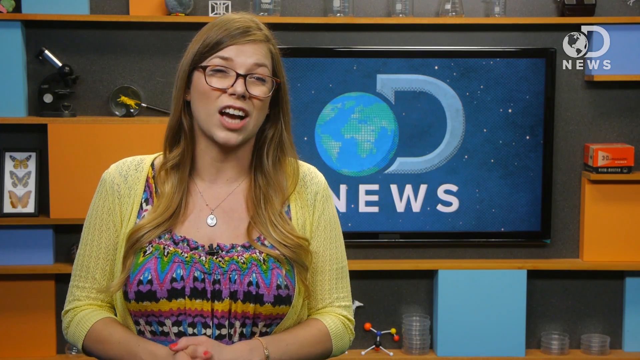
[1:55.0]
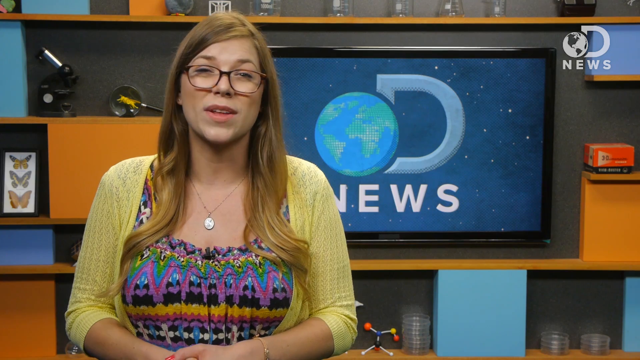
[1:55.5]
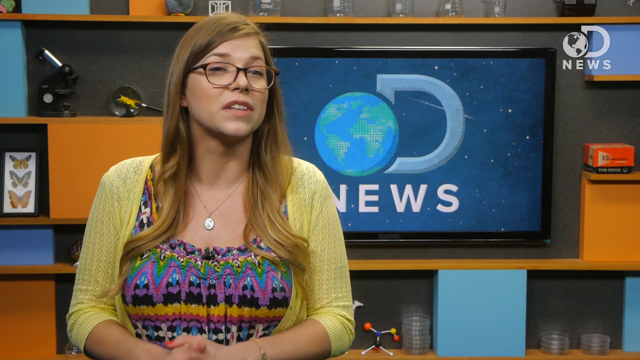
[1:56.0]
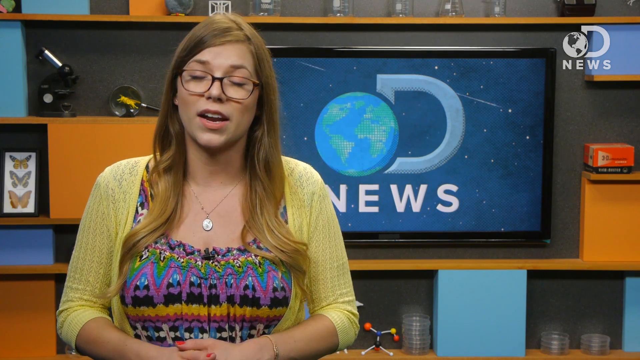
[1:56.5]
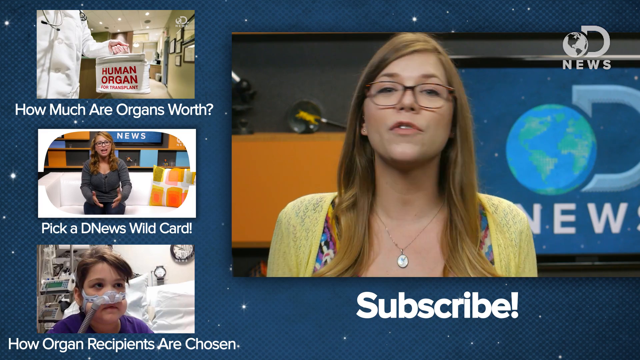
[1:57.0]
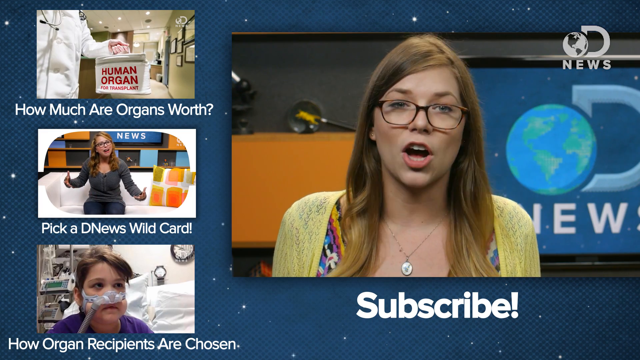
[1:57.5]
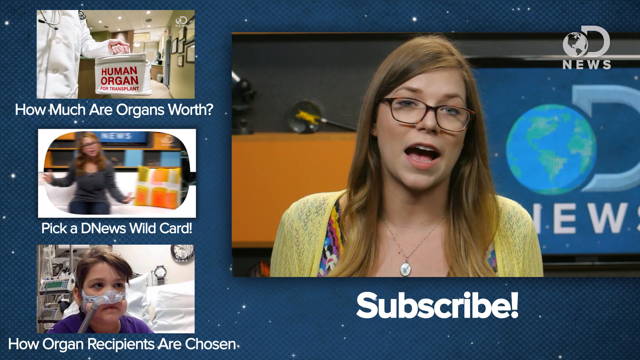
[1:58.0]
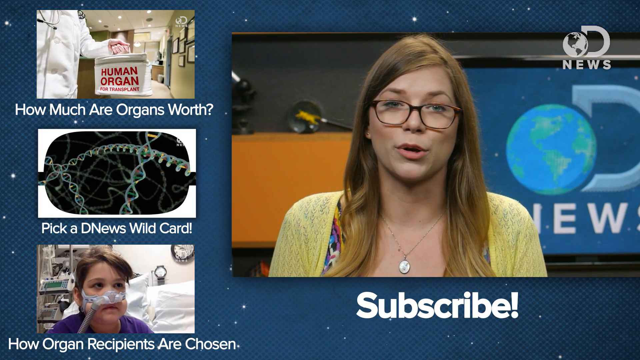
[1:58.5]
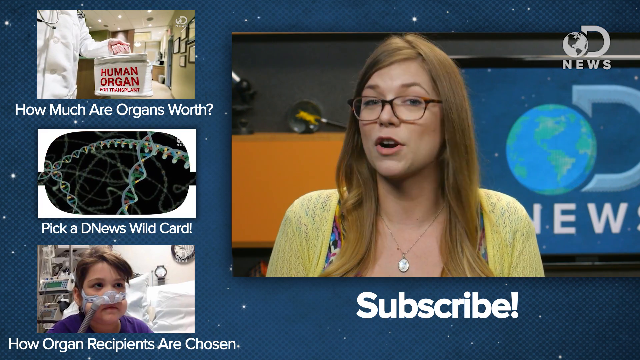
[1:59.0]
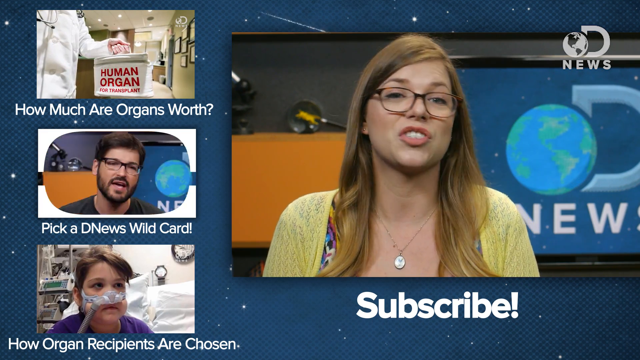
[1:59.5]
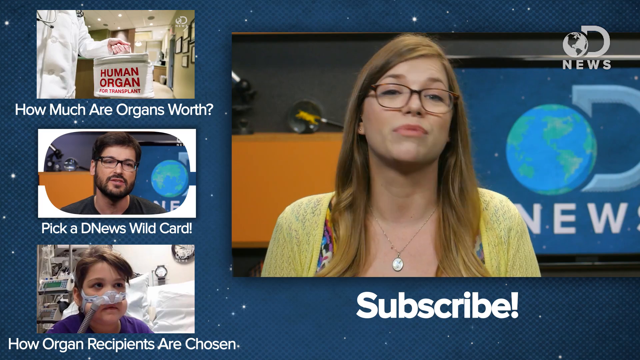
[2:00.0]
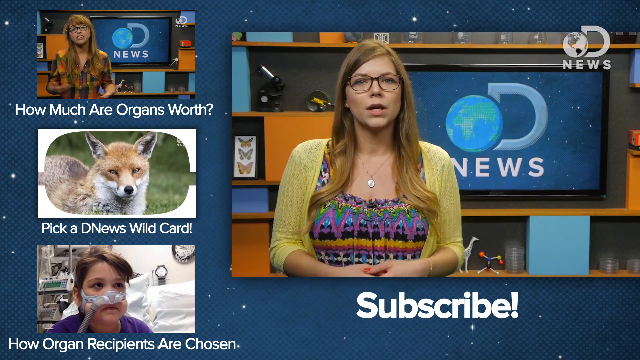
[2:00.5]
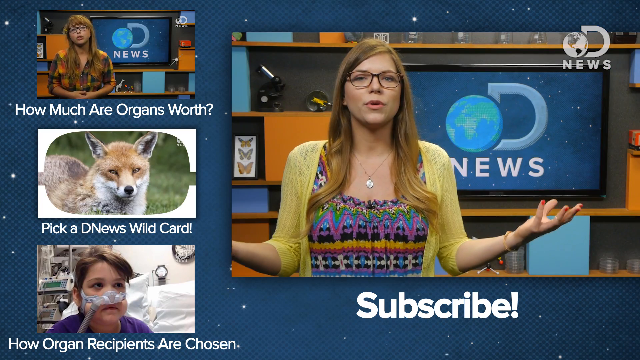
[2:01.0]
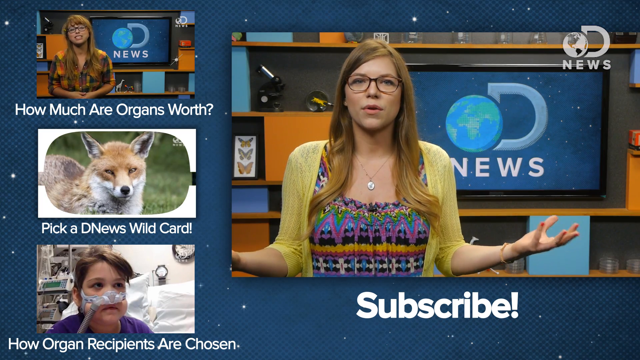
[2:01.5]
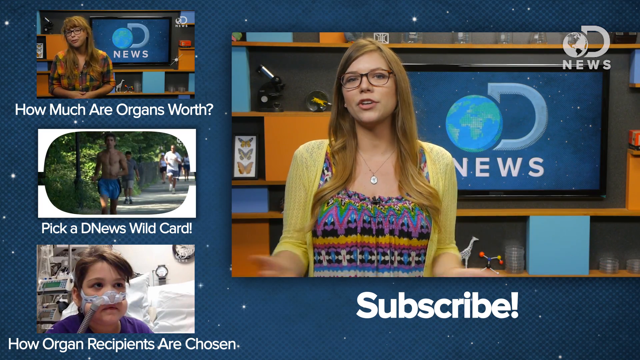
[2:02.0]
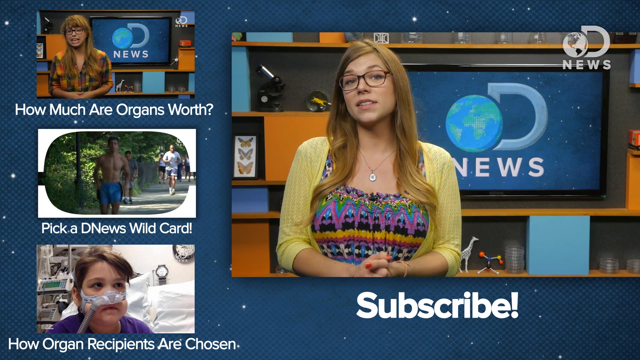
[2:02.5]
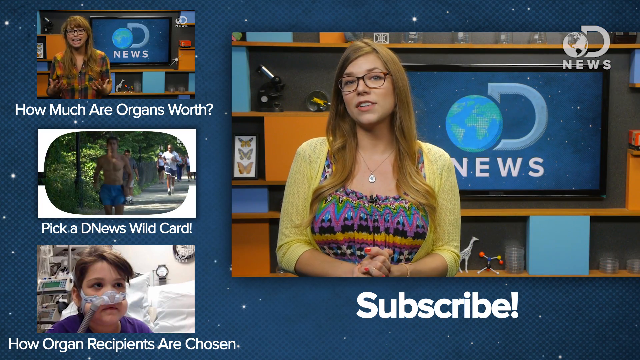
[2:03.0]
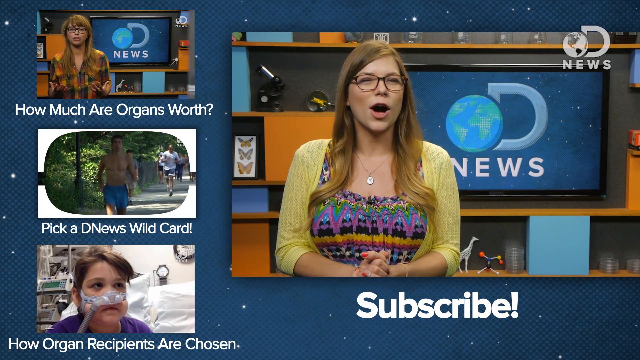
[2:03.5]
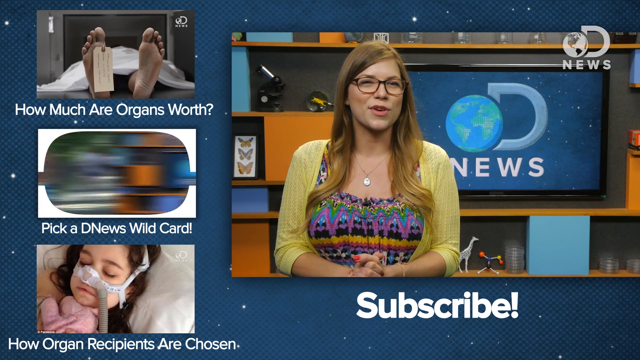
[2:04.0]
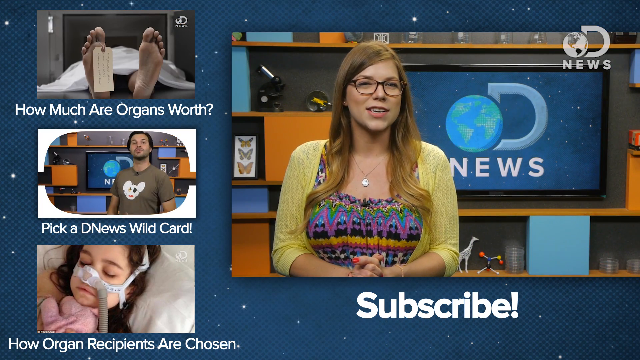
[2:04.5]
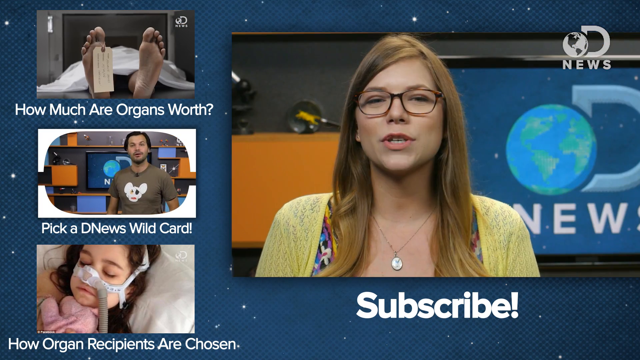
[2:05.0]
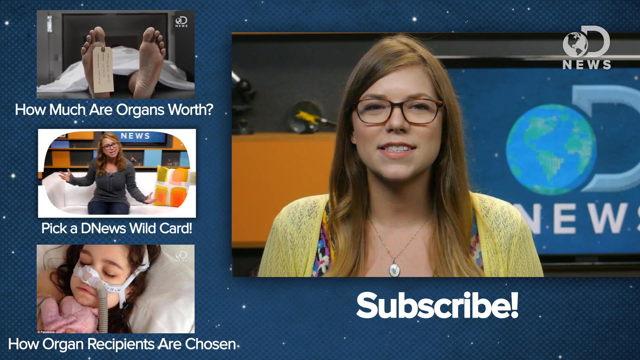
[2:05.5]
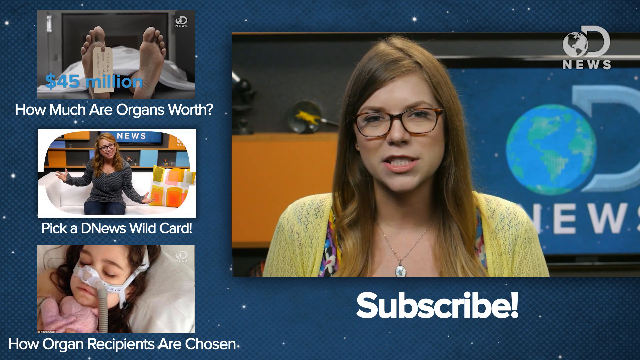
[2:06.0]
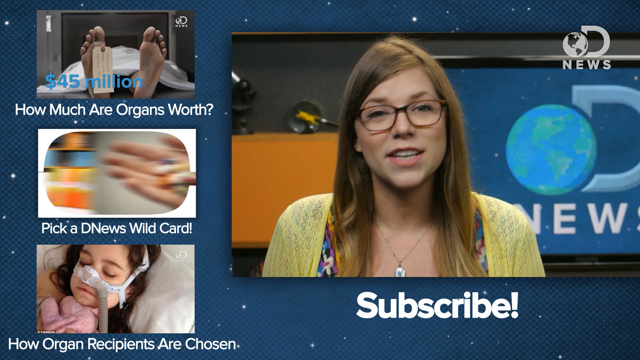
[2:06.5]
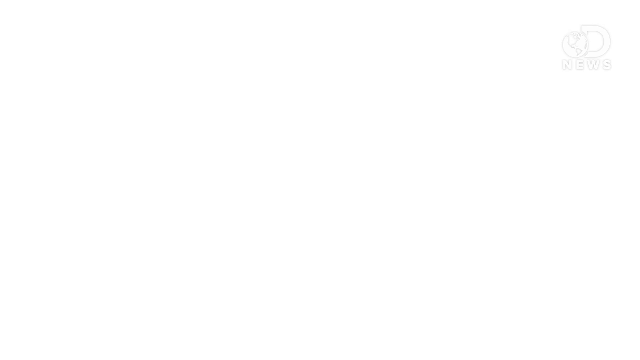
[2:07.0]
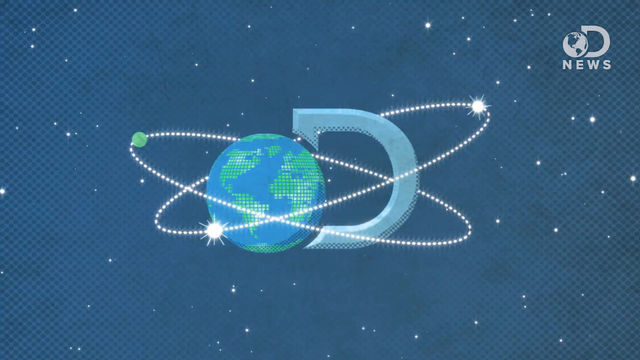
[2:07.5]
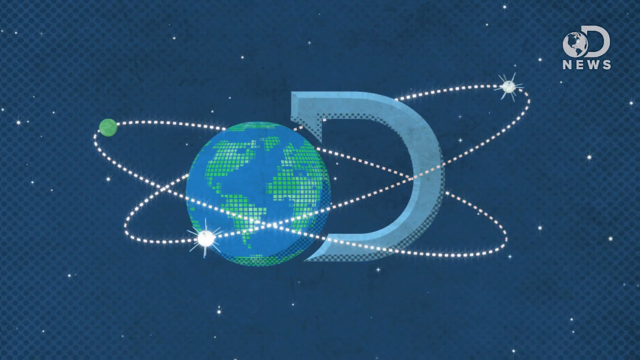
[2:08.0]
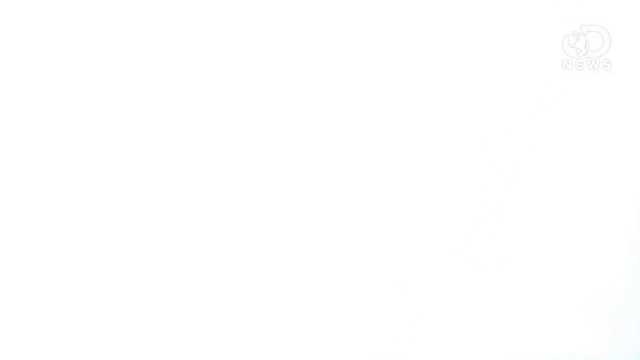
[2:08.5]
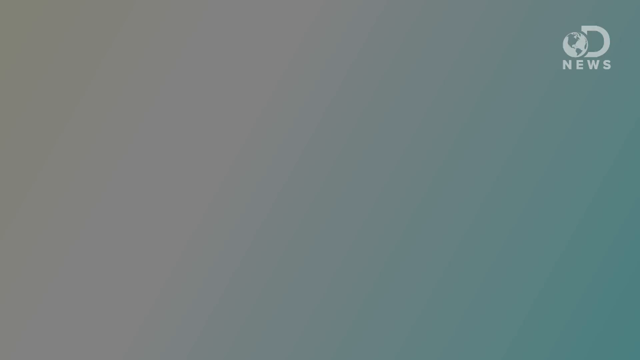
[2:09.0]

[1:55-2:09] A woman talks in front of a TV screen that says "D News", probably in a studio in front of a camera. She talks with her hands and puts them off to the side. Other clips about organs appear, including ones about something like a wild card and organ recipients, which can be clicked to watch other stories. The woman appears to be finishing her talk; her arms go out to the side and she clasps them back together as she speaks. The video then cuts to the news channel's icon: a 3D spinning drawing of the Earth with a large capital "D" by it and "News" underneath.